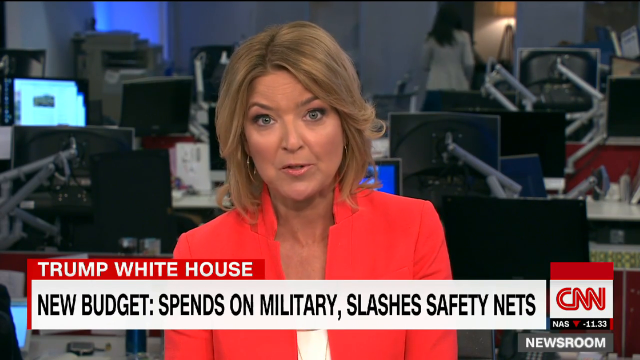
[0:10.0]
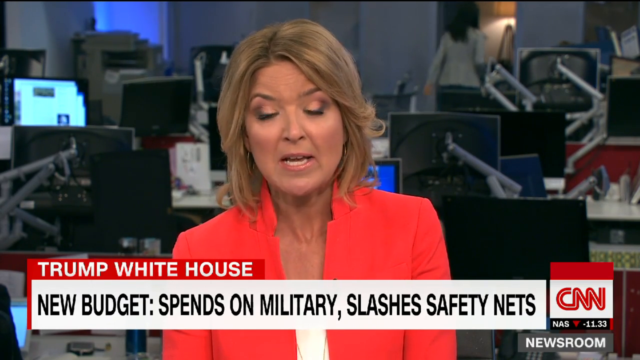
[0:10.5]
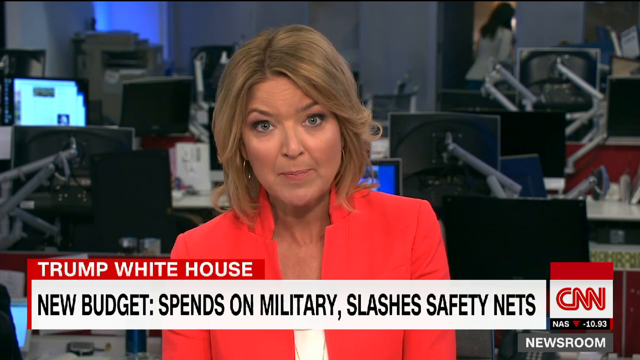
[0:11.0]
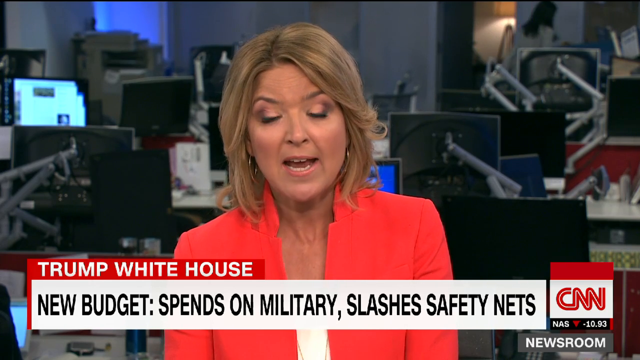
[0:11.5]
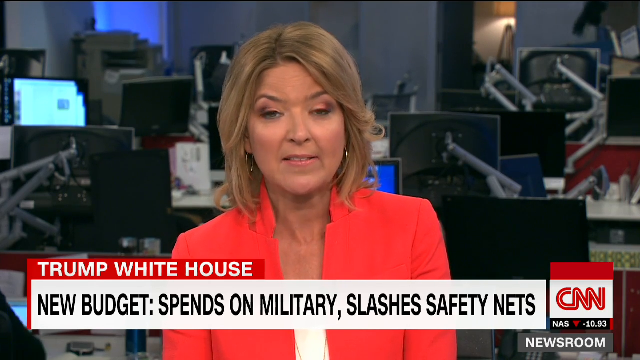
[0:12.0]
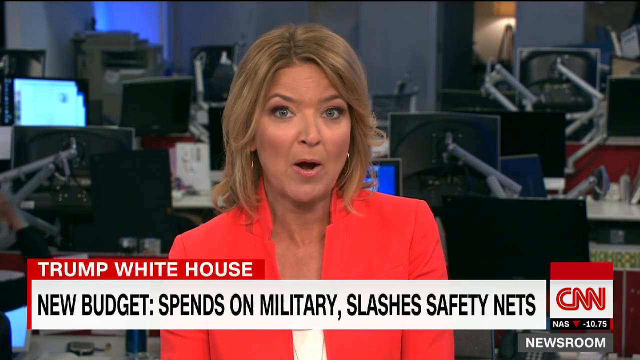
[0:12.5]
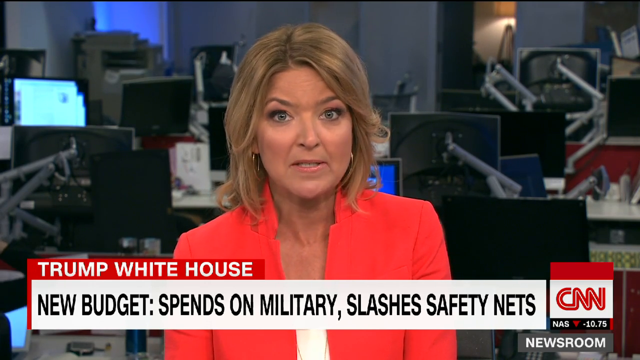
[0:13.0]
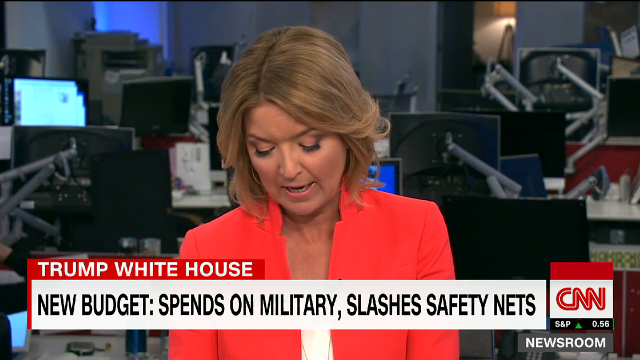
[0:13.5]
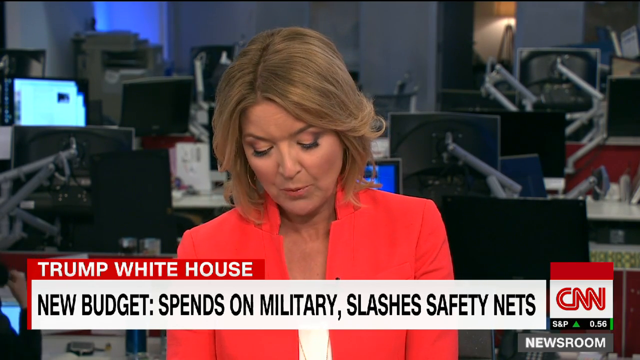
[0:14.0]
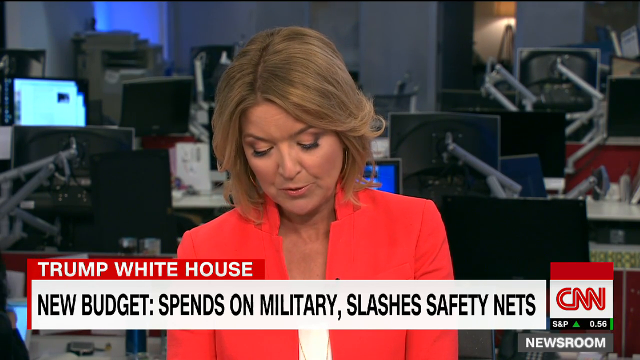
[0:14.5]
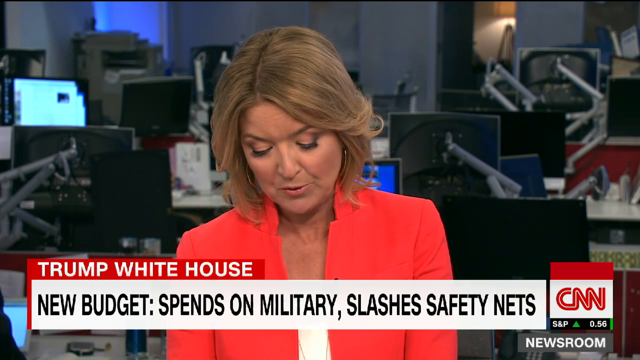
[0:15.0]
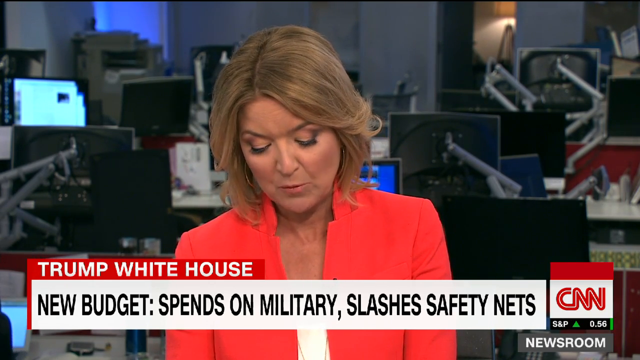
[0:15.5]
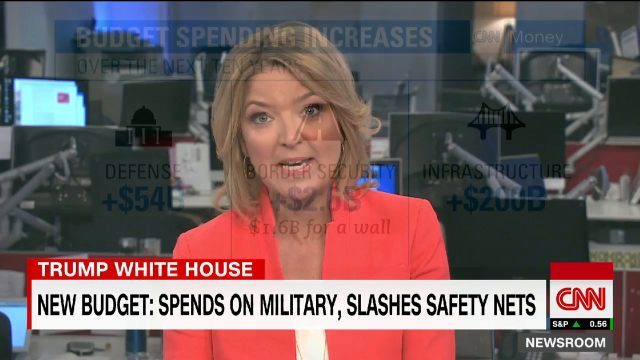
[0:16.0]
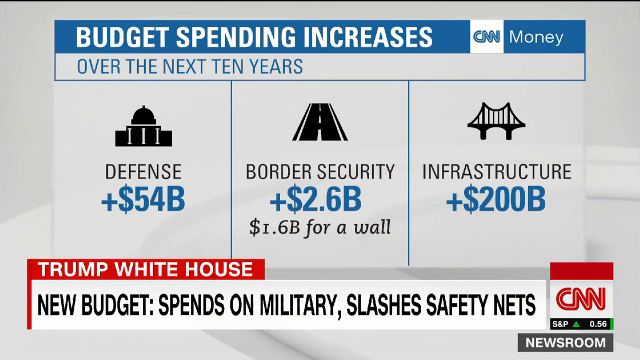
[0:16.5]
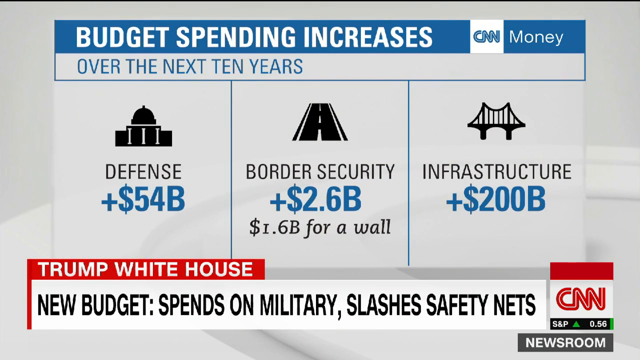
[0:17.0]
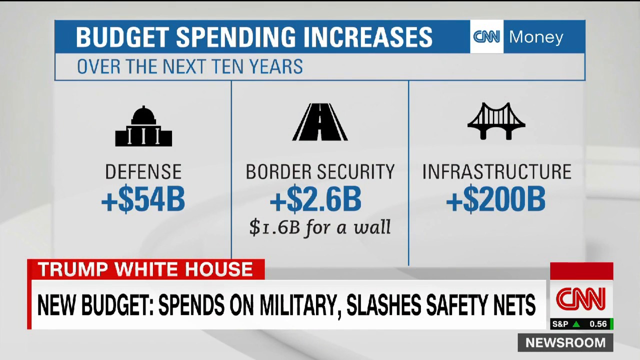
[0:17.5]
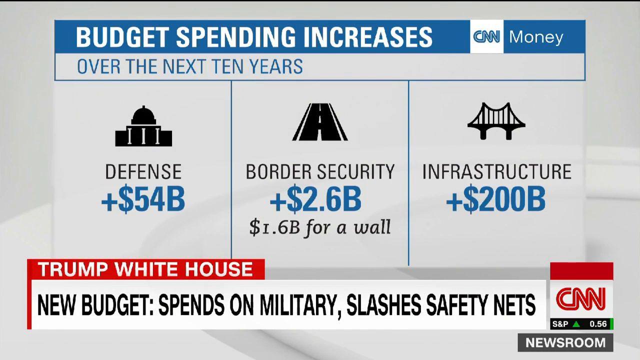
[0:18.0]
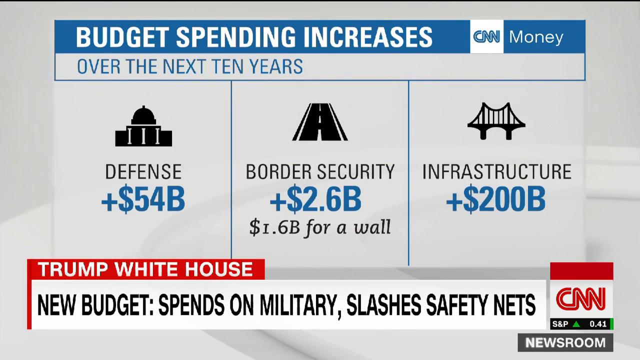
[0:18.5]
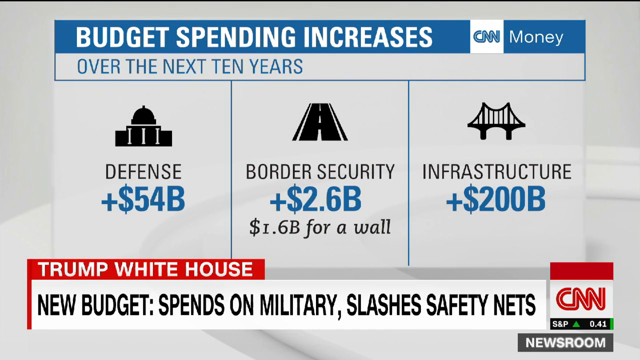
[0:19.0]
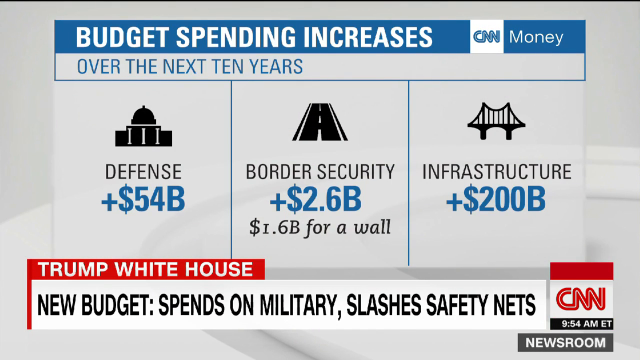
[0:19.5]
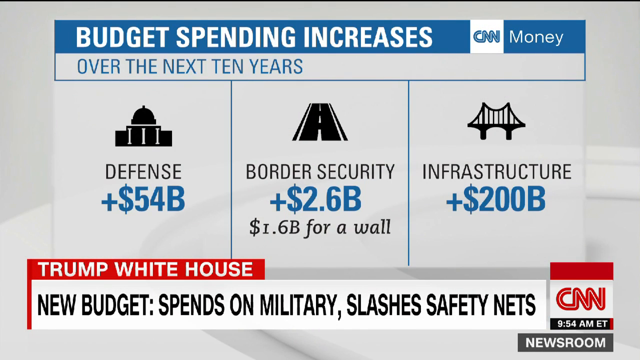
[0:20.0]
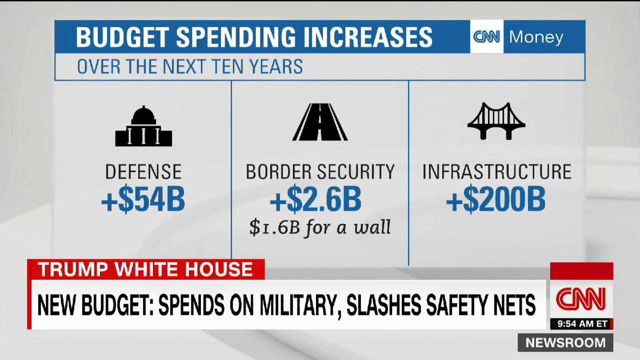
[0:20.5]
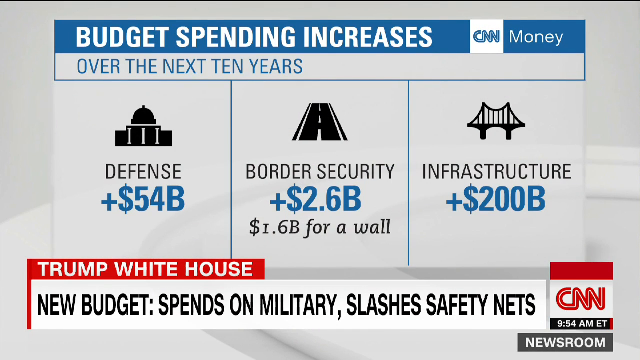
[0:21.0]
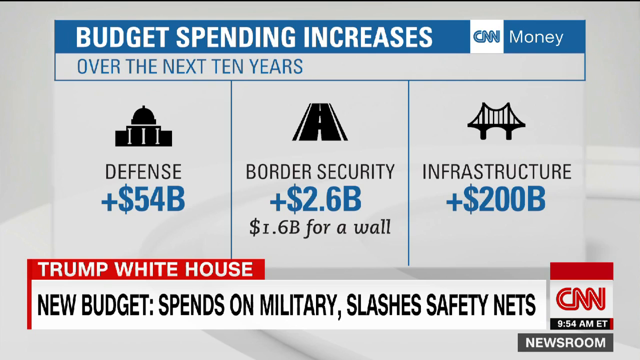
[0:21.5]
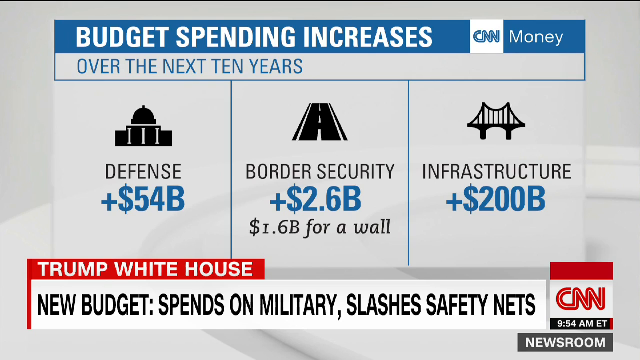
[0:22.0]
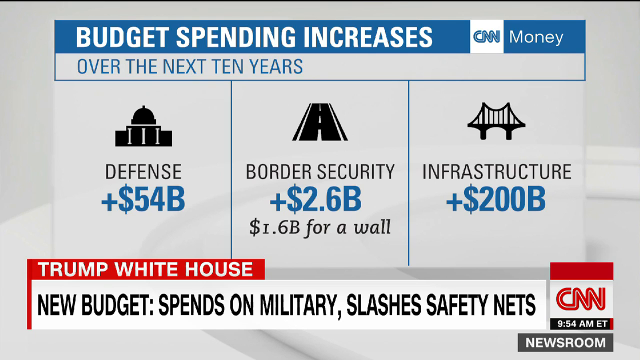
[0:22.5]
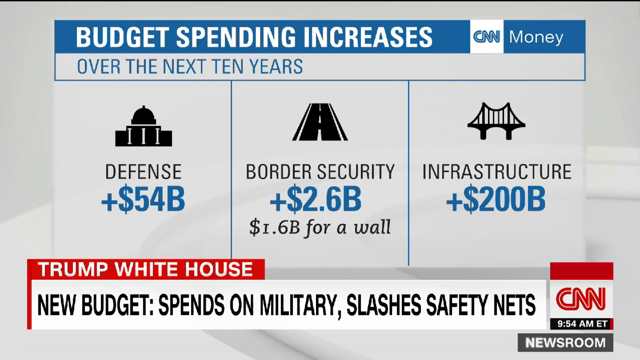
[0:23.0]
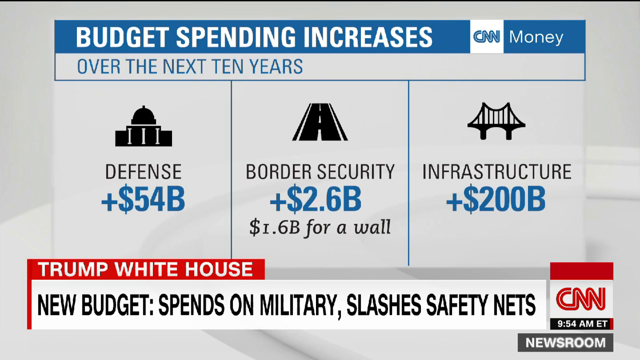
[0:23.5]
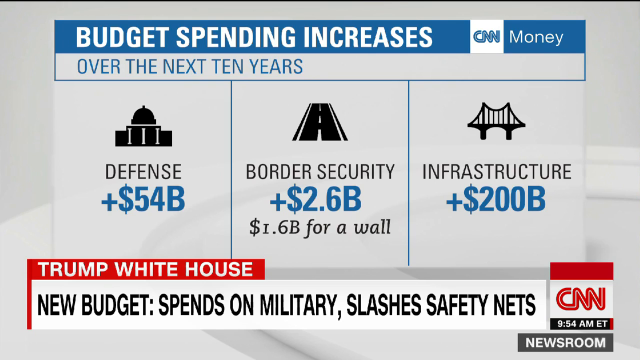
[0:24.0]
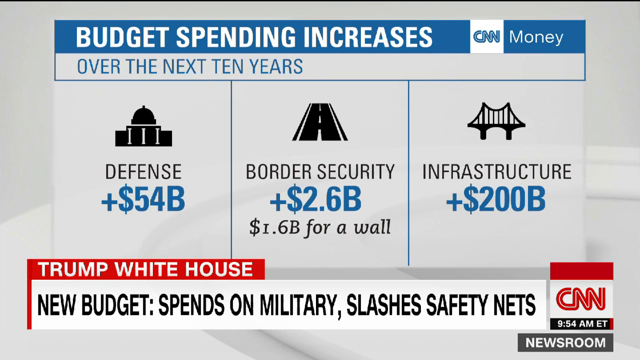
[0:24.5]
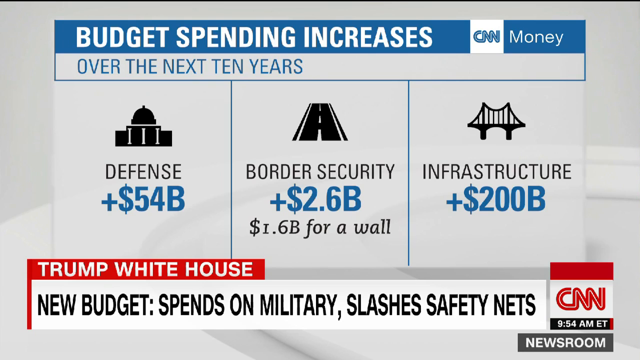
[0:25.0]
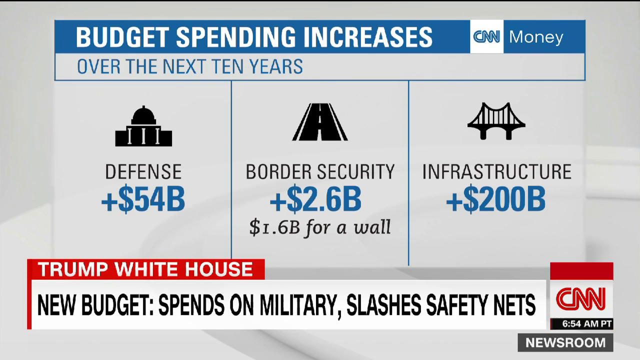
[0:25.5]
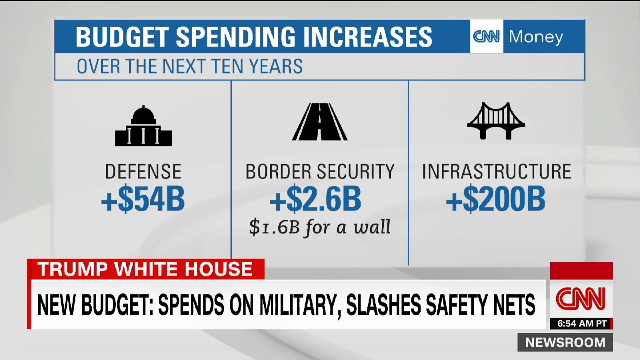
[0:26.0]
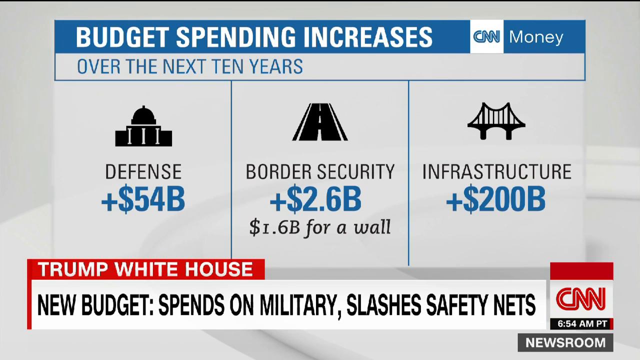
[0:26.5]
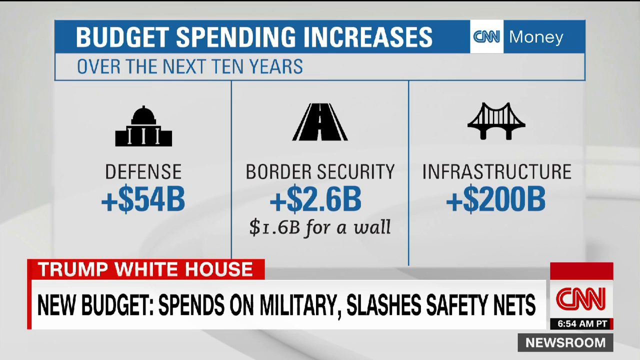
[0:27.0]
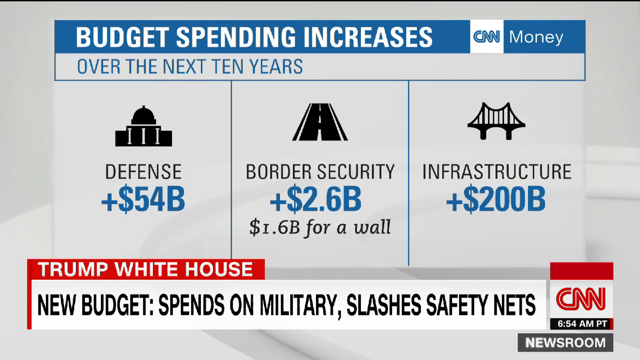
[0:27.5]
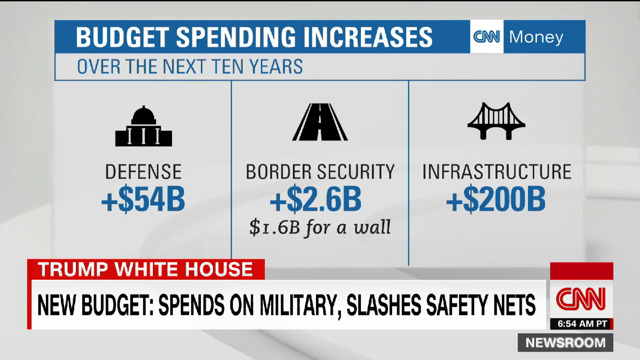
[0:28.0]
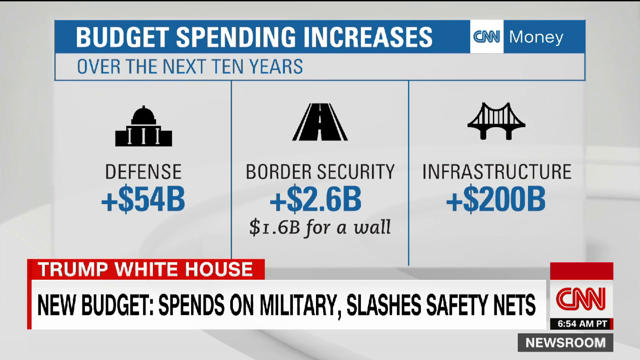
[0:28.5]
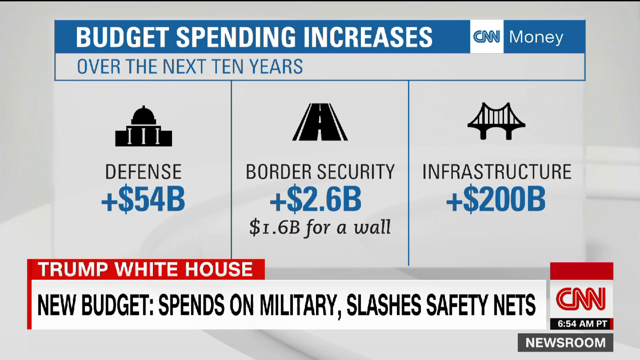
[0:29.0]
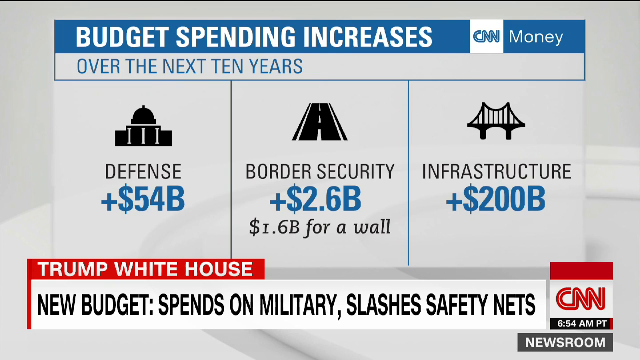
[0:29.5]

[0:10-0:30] The woman reading the news presents budget spending increases over the next 10 years. The figures on screen cover the military's budget plan, listing defense, border security and infrastructure, with large amounts of money written out for each.